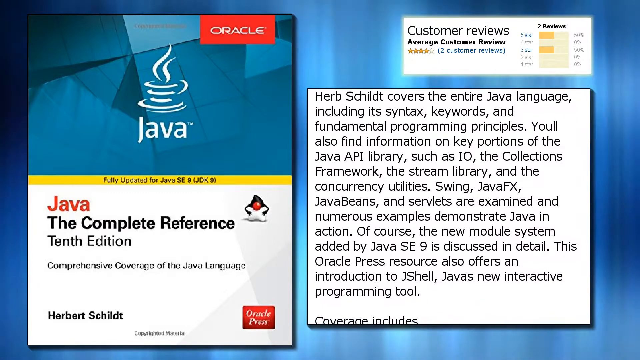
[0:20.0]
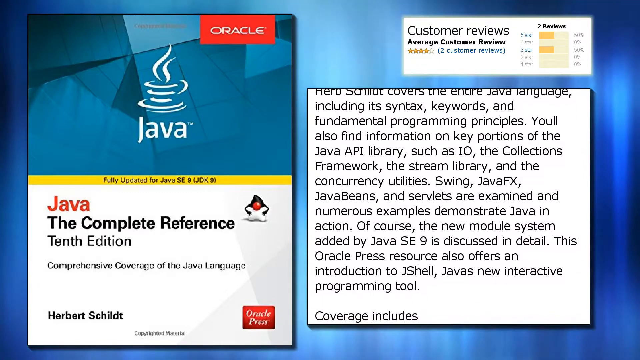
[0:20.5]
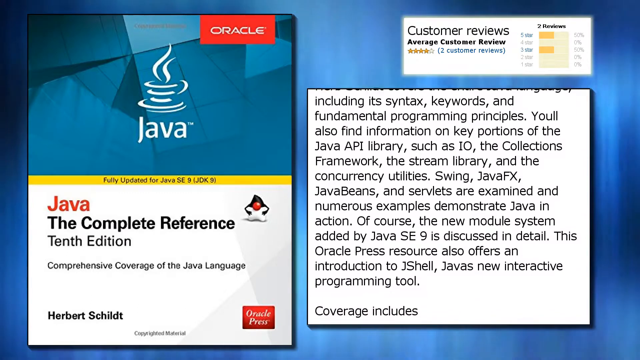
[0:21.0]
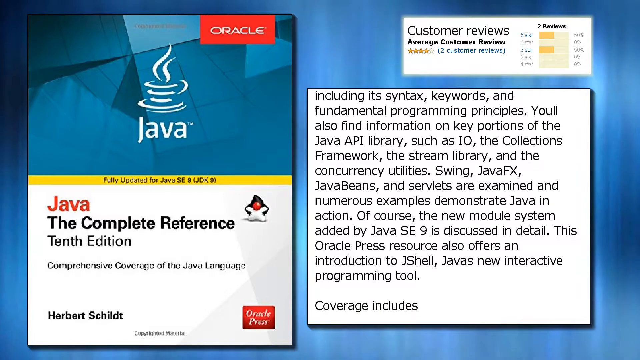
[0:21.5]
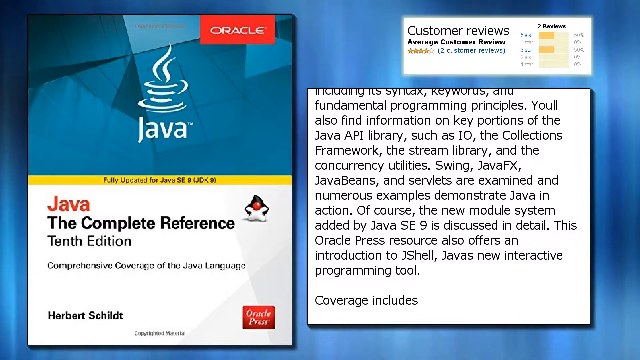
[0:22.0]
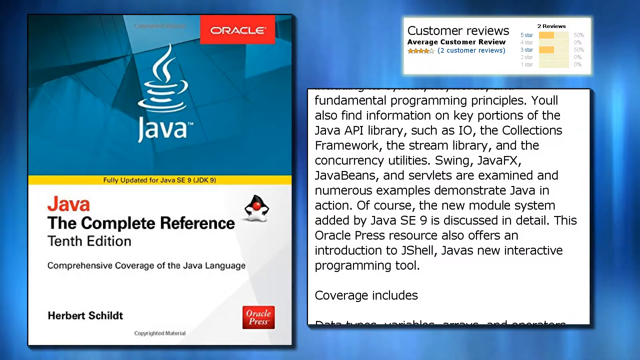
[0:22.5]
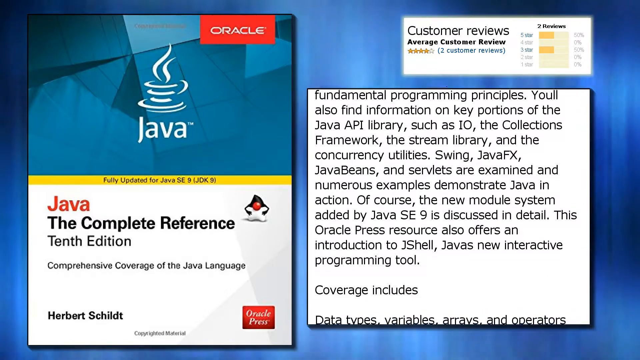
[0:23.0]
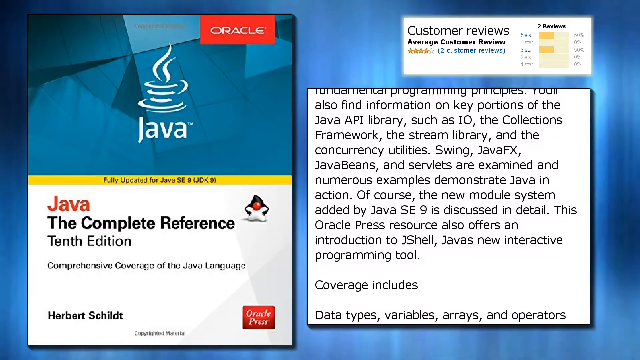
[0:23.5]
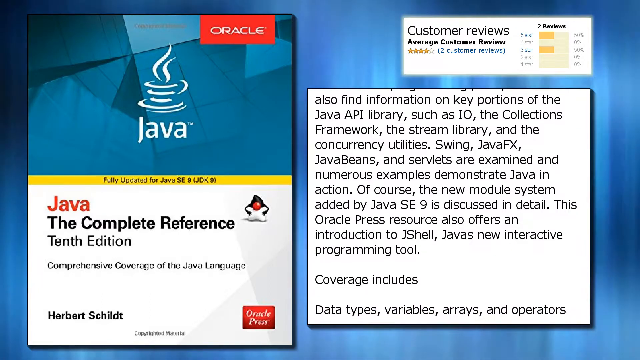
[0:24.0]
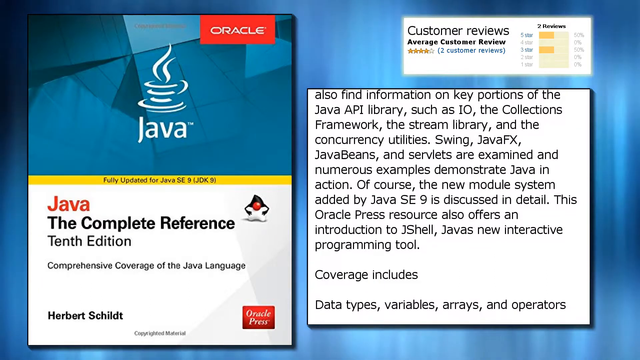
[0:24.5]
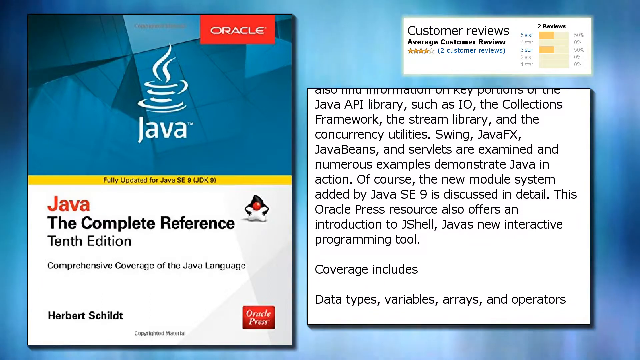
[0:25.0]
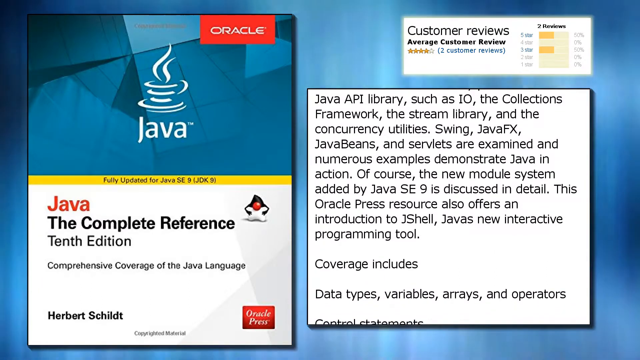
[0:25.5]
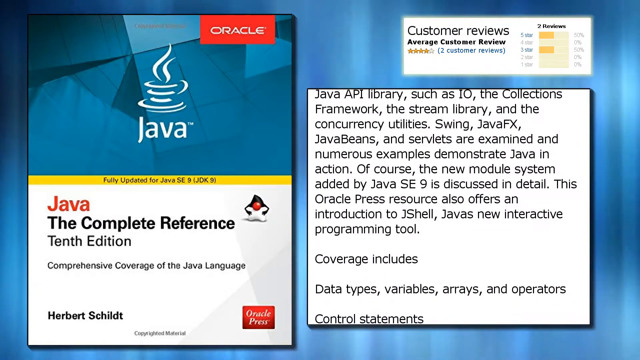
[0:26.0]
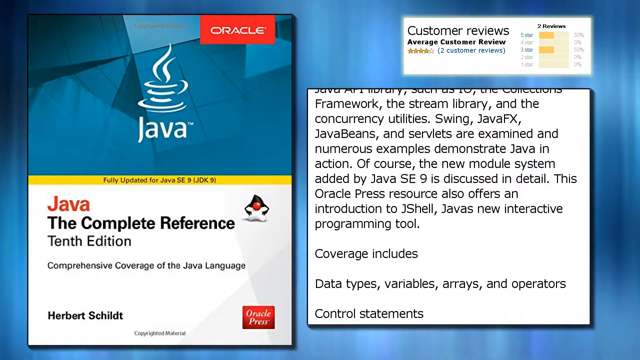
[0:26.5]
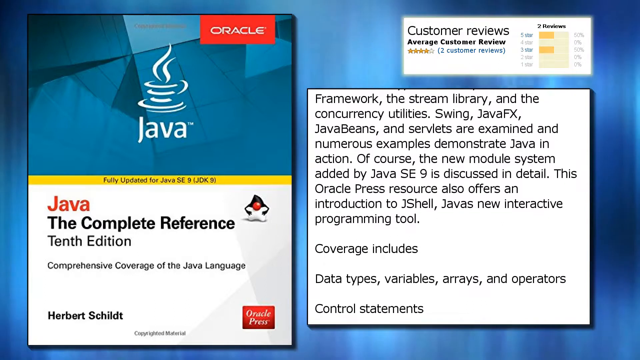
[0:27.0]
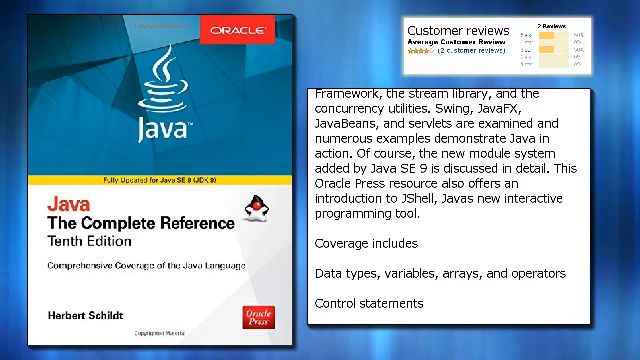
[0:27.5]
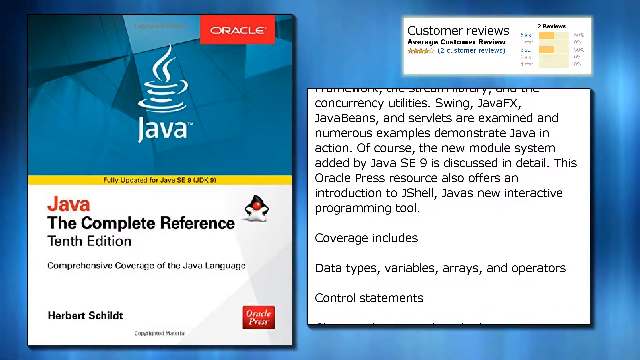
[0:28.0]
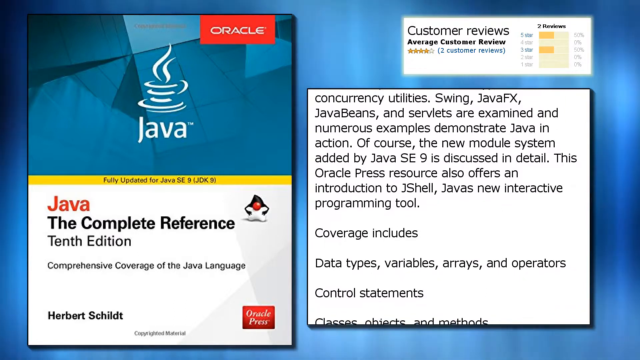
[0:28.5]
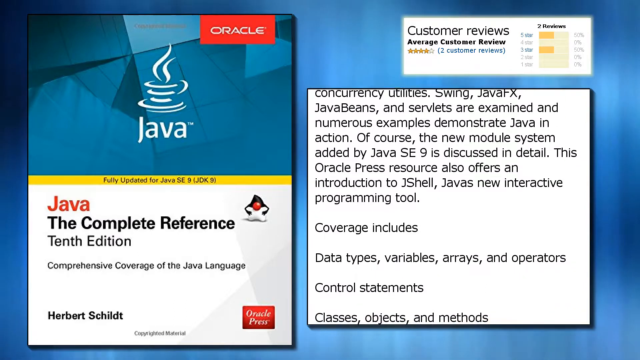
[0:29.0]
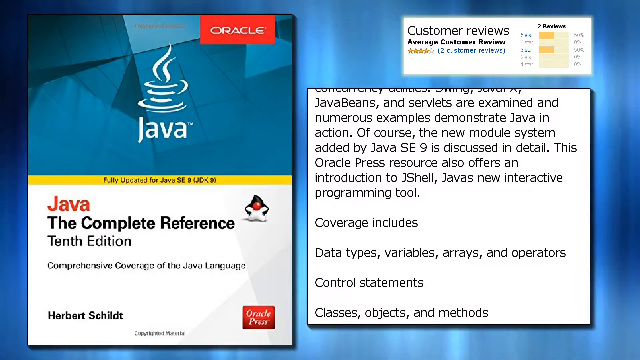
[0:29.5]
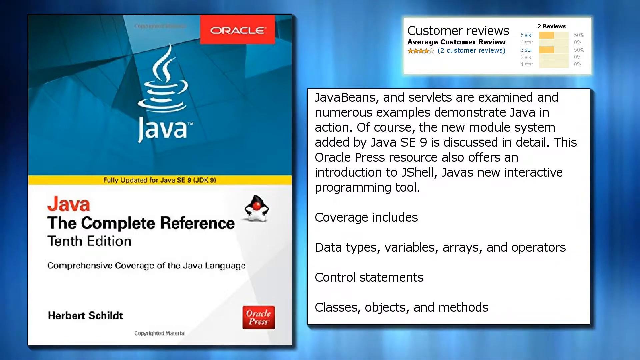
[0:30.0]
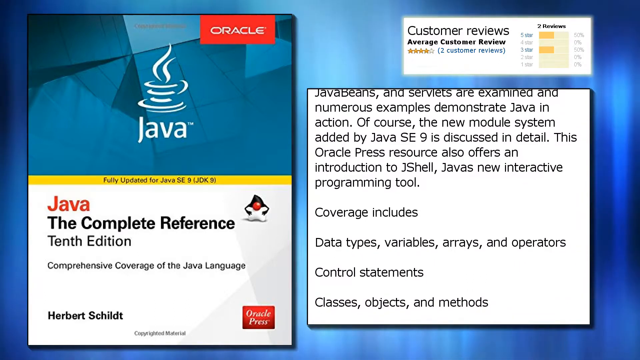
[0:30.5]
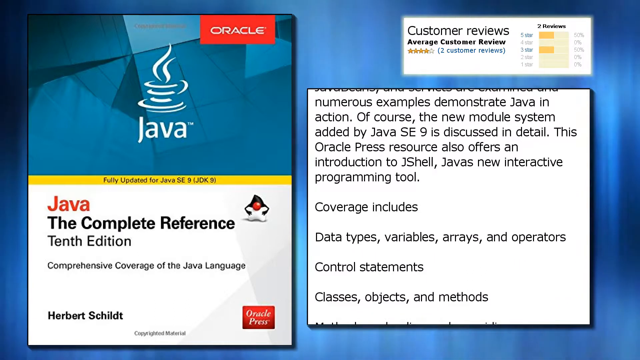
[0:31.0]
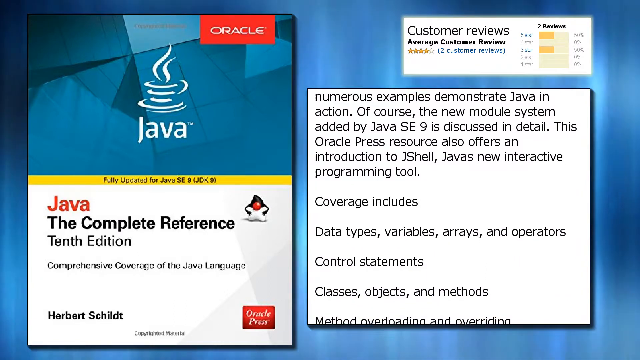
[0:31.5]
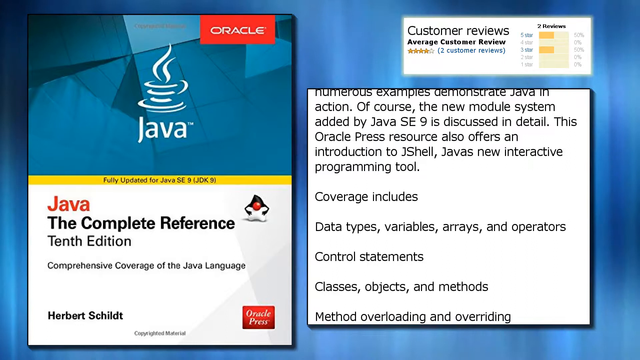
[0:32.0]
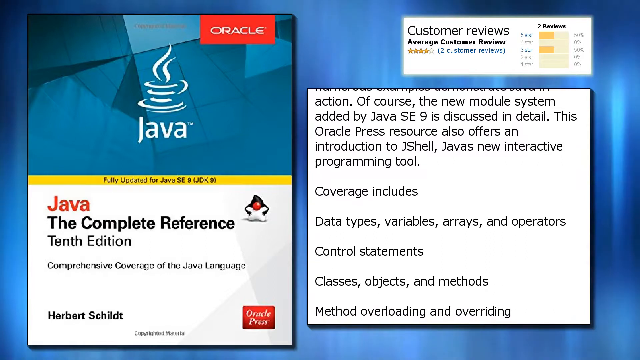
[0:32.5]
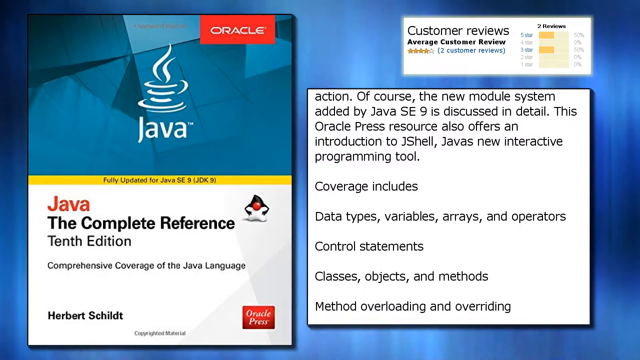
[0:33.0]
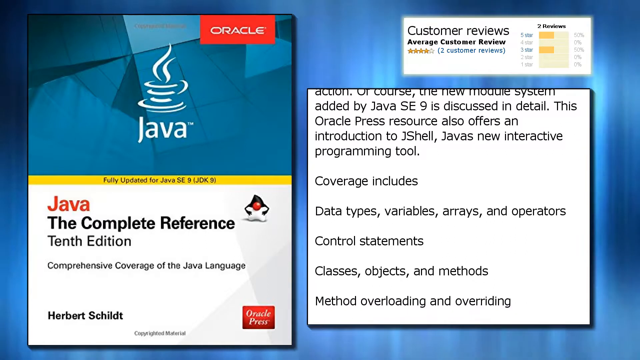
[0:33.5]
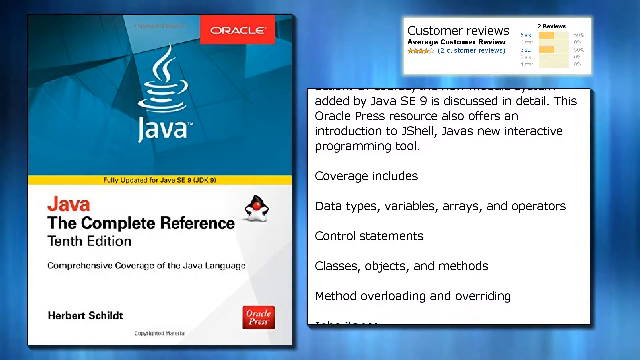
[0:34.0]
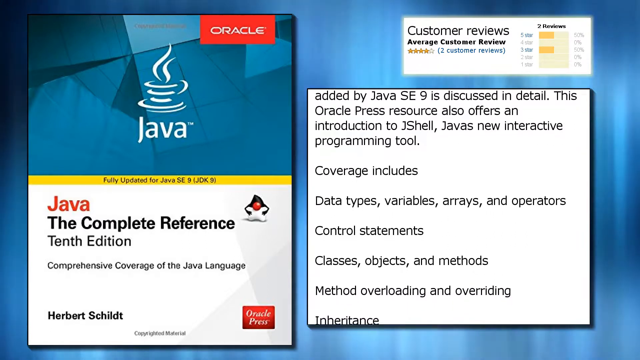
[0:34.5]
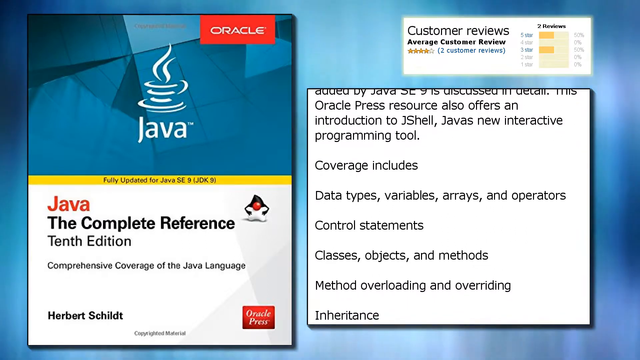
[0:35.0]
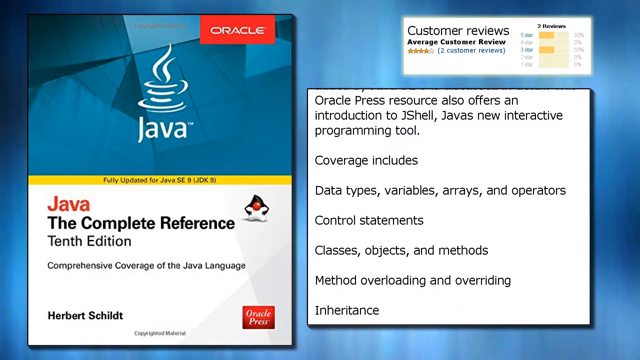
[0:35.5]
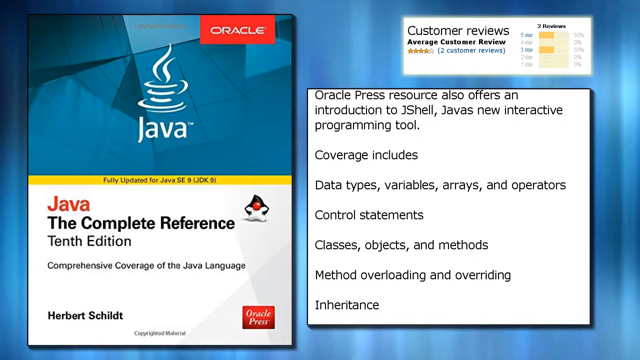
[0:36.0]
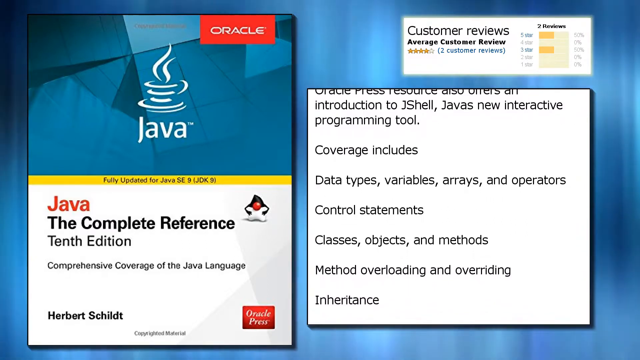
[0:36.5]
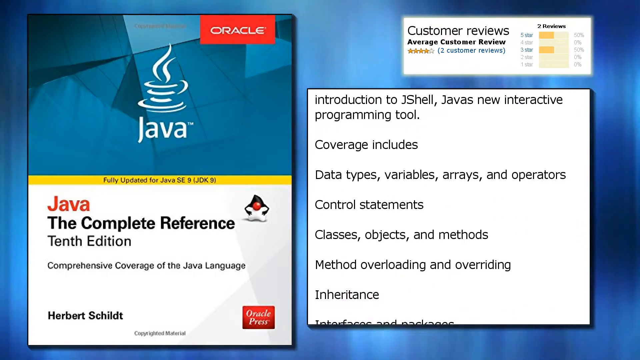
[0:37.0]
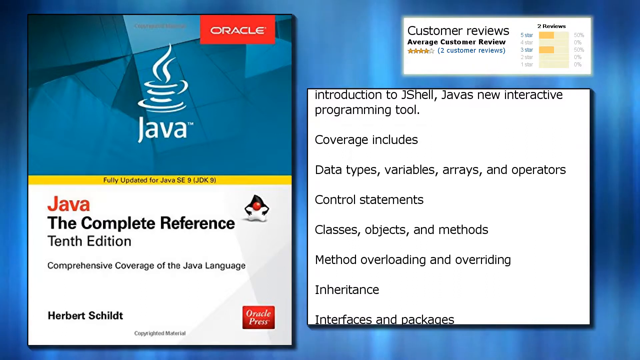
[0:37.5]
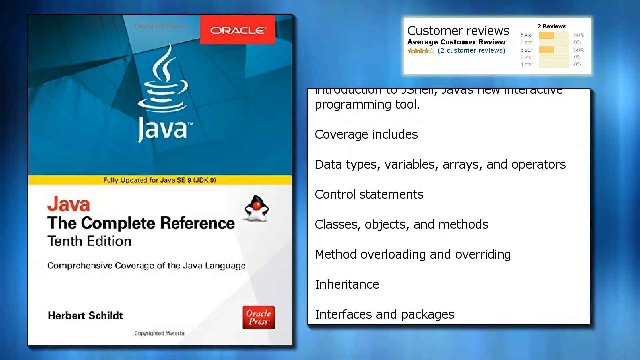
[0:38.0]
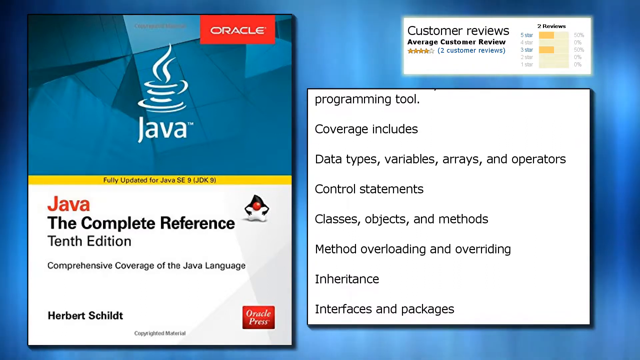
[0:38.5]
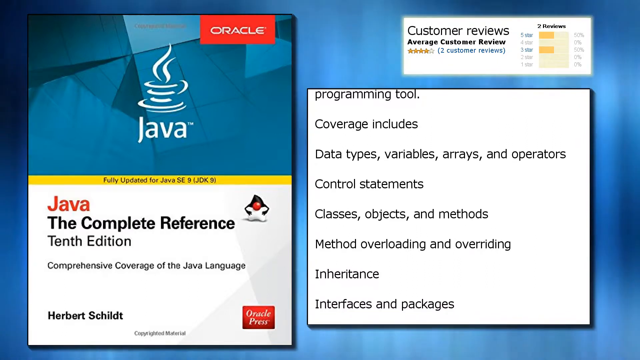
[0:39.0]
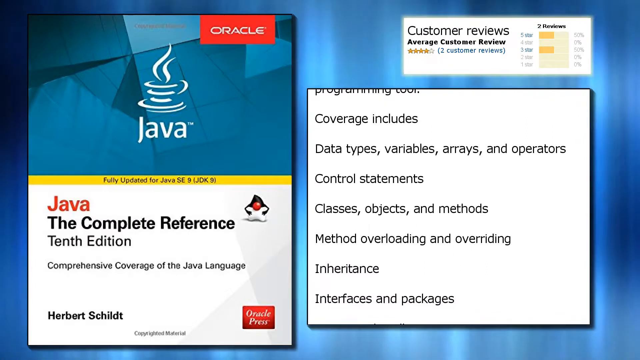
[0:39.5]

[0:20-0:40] The description on the right side of the screen continues to scroll down at a consistent pace, showing more information on the topic. It shows that the coverage includes different data types and lists different options there. The blue background graphics, which look similar to the colors of the Northern Lights, keep moving at a consistent rate. The Java Complete Reference 10th edition cover on the left stays still, as do the customer reviews at the top right. There are two reviews, one with a five-star rating and one with a three-star rating, and the reviews show an average customer review of four stars from two customer reviews. The description keeps scrolling down.